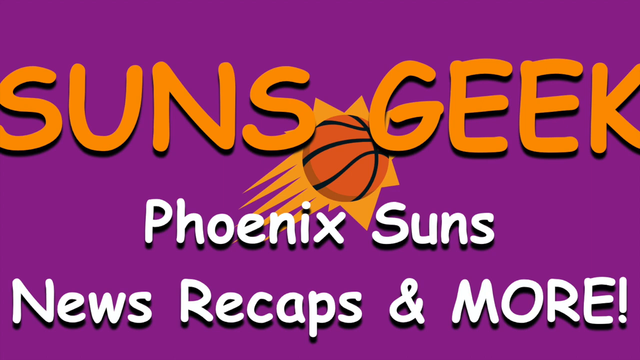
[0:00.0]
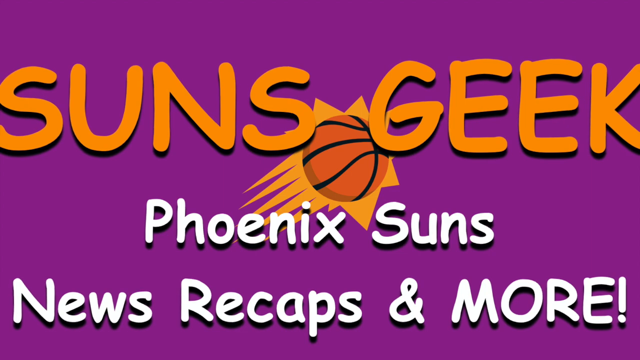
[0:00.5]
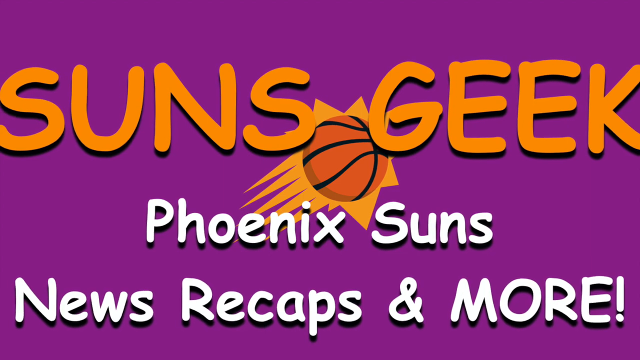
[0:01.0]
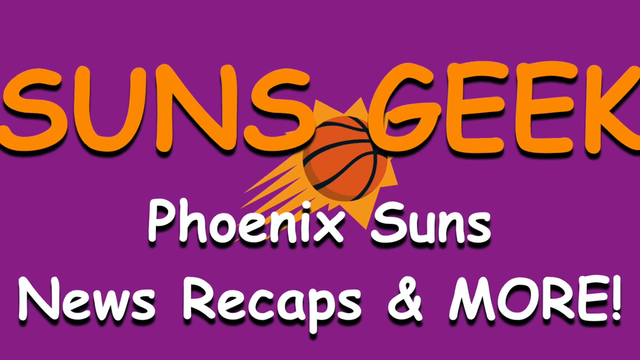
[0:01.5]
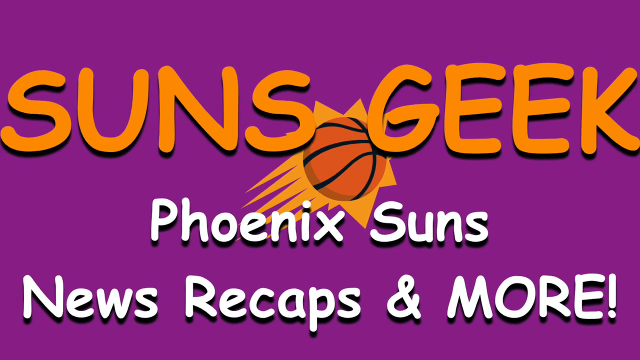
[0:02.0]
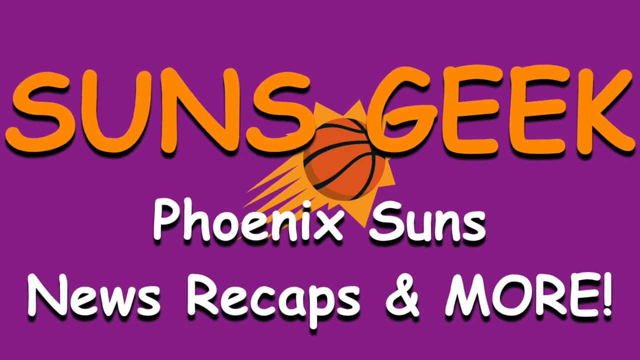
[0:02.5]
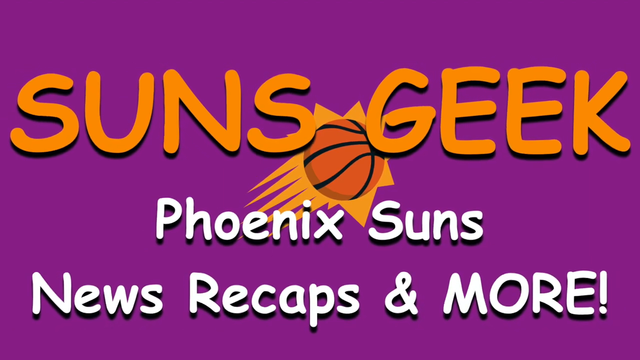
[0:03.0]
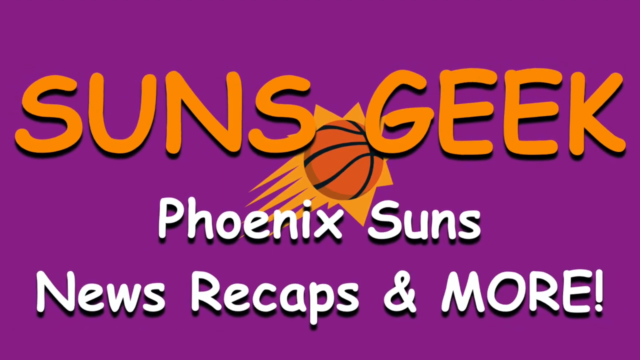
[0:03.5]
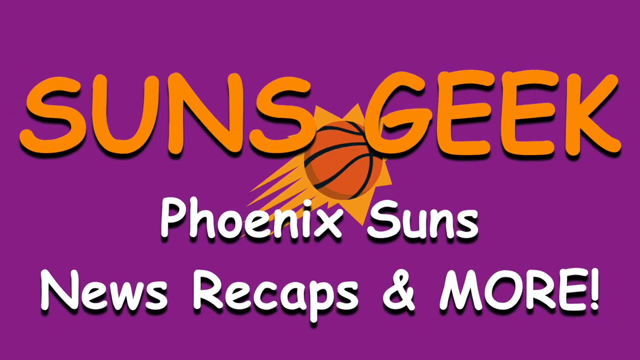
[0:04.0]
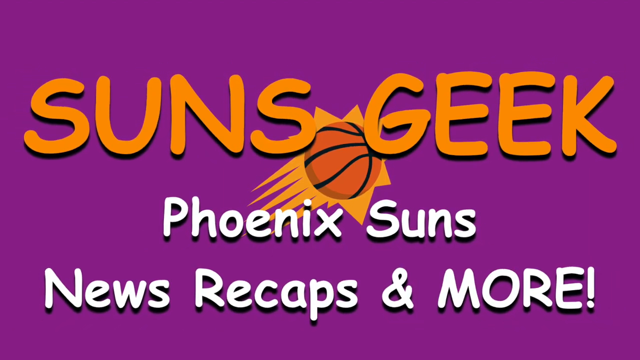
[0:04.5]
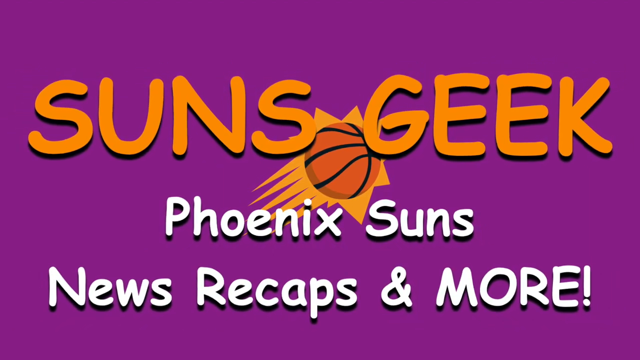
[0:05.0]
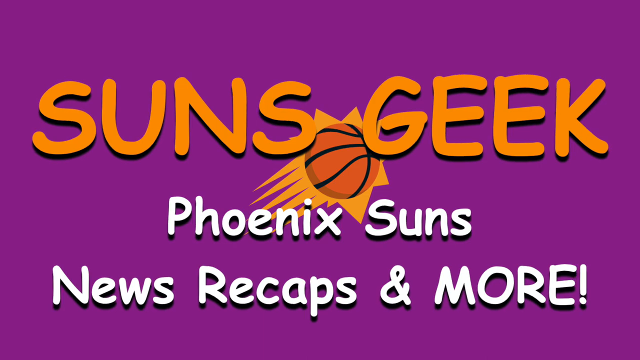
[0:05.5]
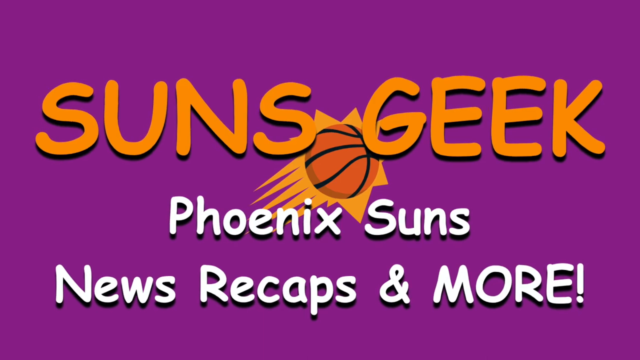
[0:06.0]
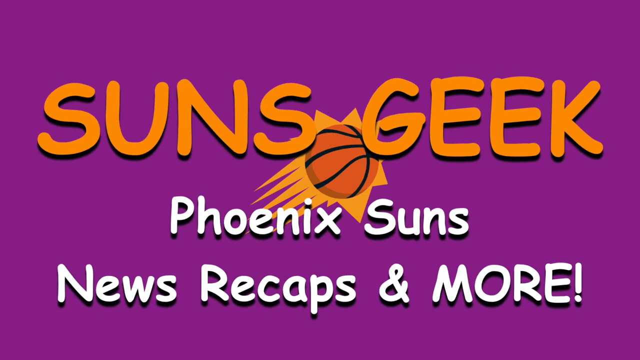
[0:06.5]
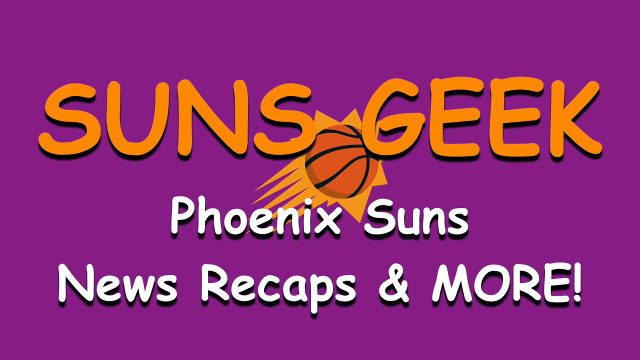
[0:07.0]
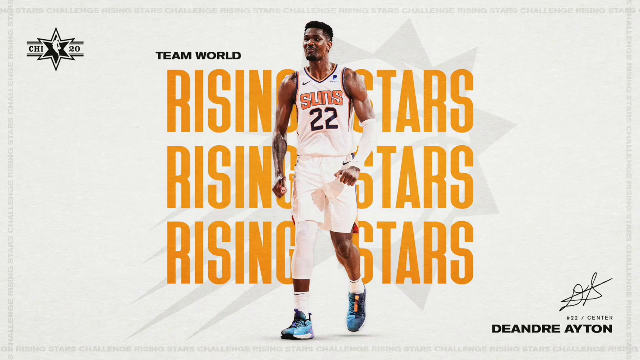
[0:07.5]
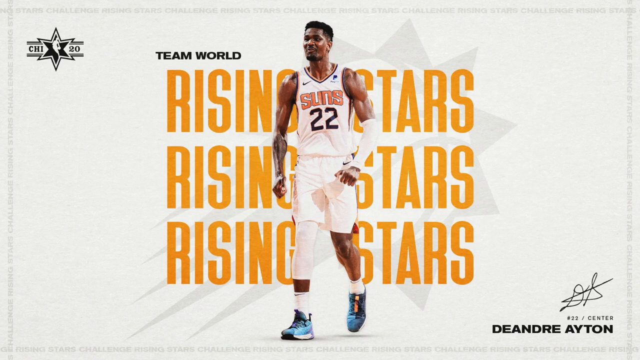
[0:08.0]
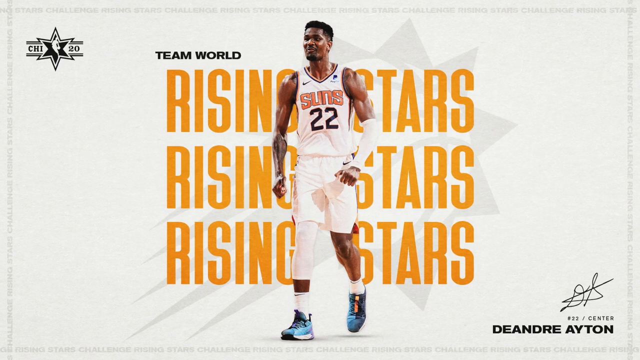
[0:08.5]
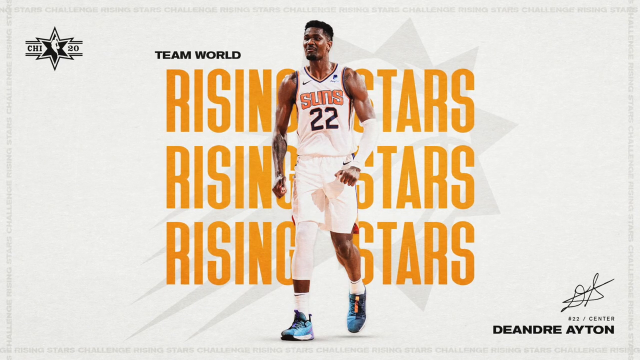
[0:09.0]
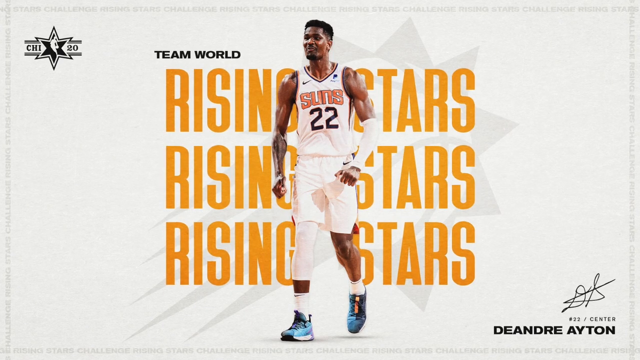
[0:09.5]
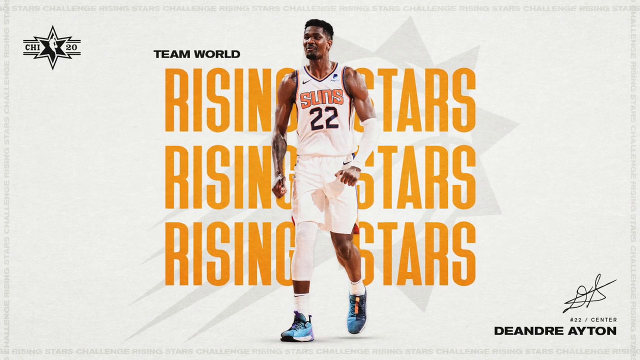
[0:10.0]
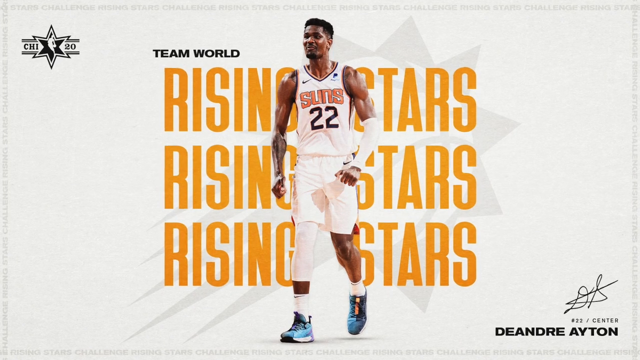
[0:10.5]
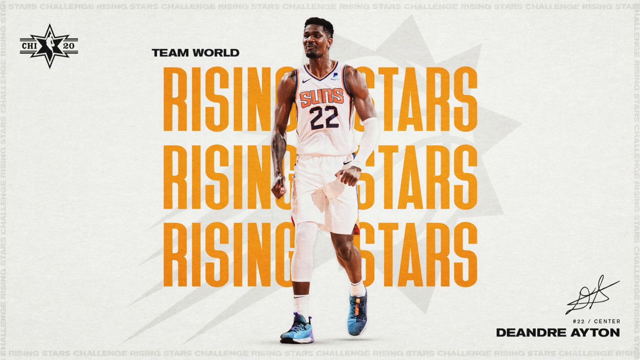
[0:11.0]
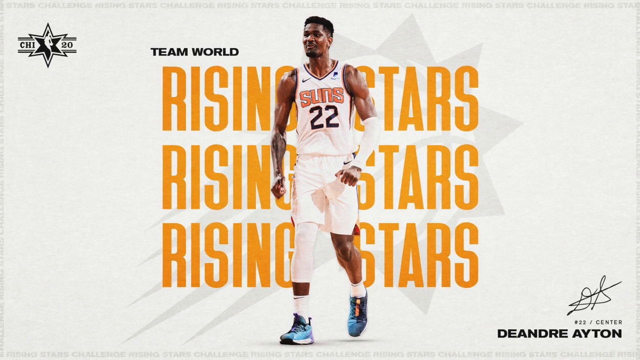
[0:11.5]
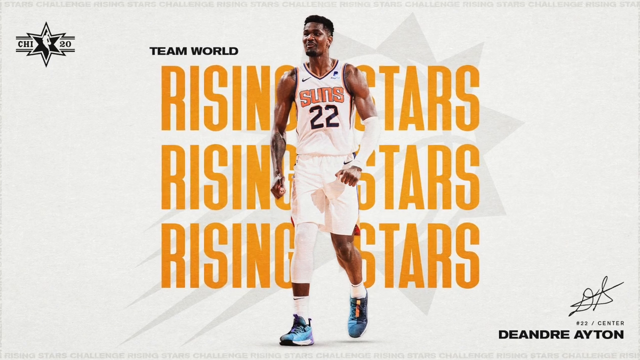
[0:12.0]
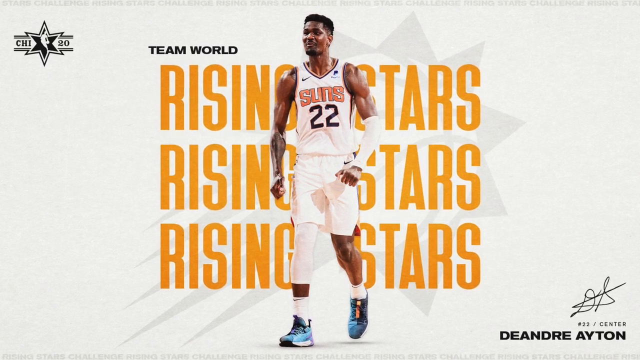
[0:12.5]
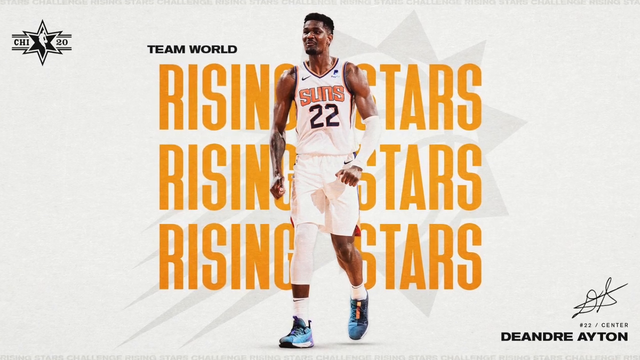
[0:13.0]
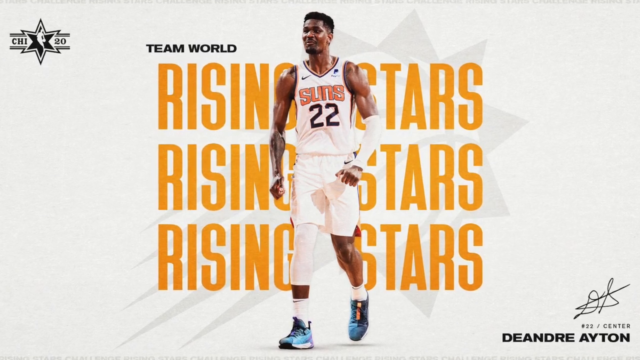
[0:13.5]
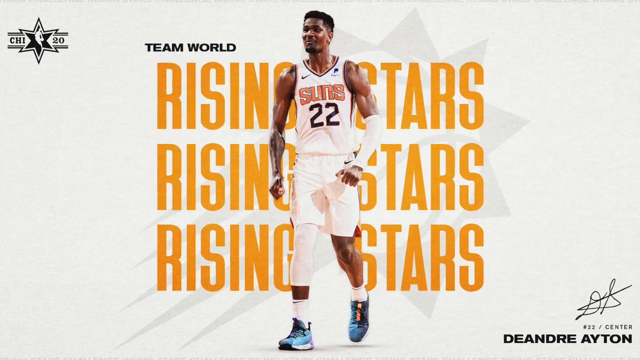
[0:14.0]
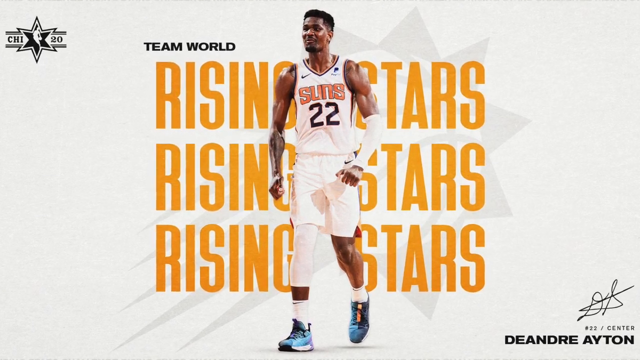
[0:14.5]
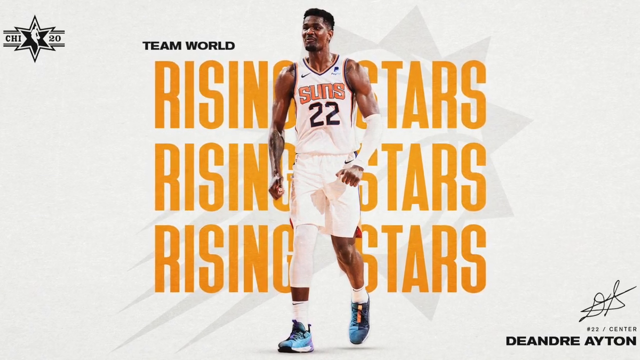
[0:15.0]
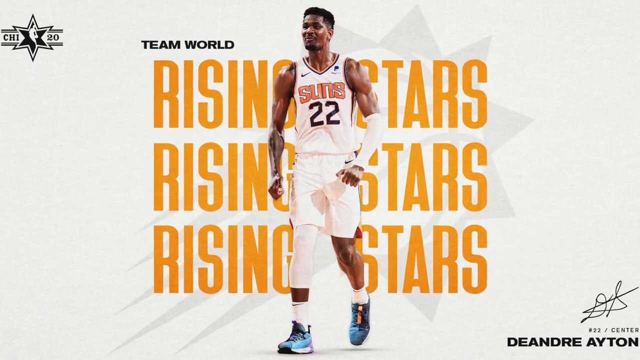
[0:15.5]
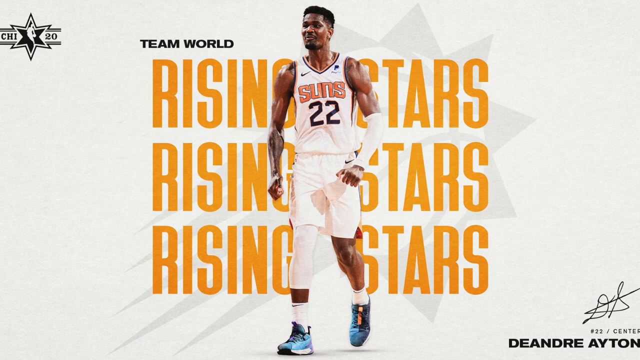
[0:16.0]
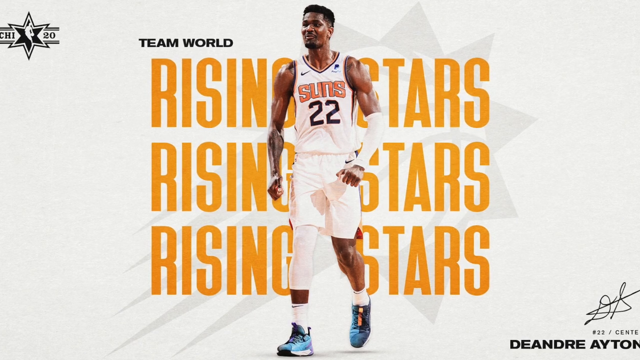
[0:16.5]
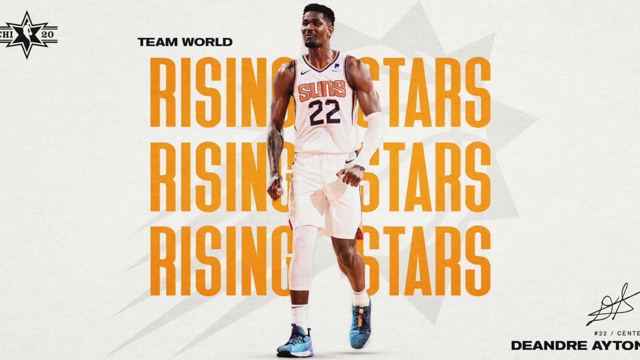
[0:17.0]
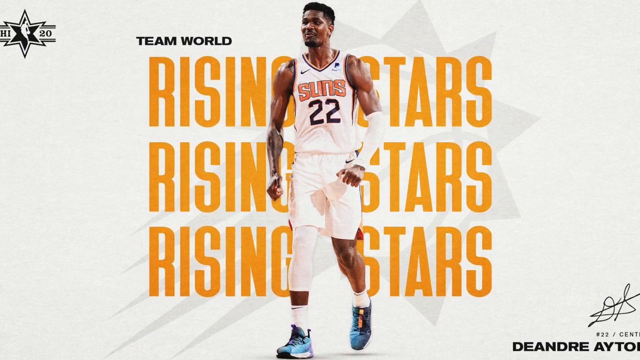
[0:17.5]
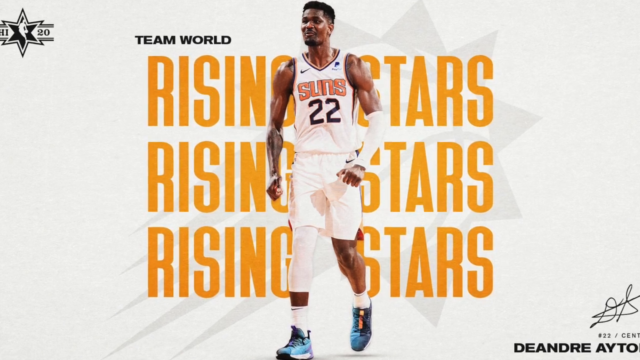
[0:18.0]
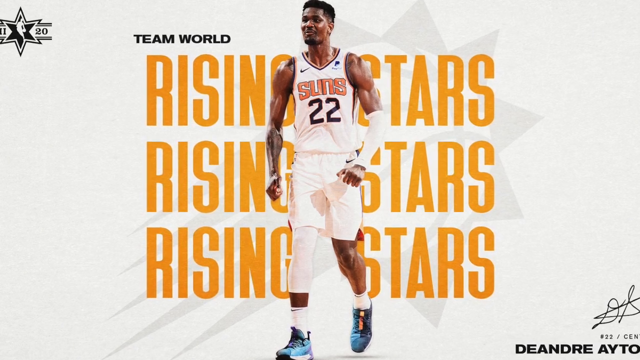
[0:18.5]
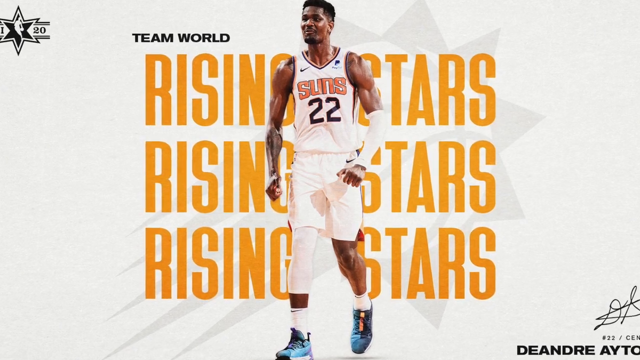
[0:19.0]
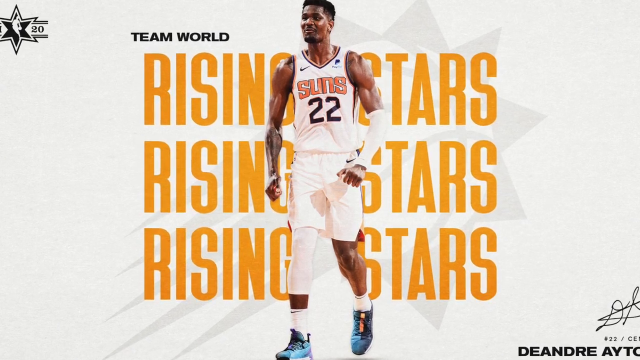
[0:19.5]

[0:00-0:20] In the middle of the screen are the words "Suns Geek Phoenix Suns news recaps and more," with a picture of a basketball in the middle, on a purple background. The scene changes to a still image of a basketball player looking to the left. Behind him, the words "Rising Stars" appear three times. The player plays for the Phoenix Suns and wears number 22, with white shorts, a white jersey, a white sports wrap around his right leg and a white sports wrap around his left arm. In the bottom right corner is the player's name, DeAndre Ayton, showing that he is the team's center, along with an autograph of his initials. The background is white.